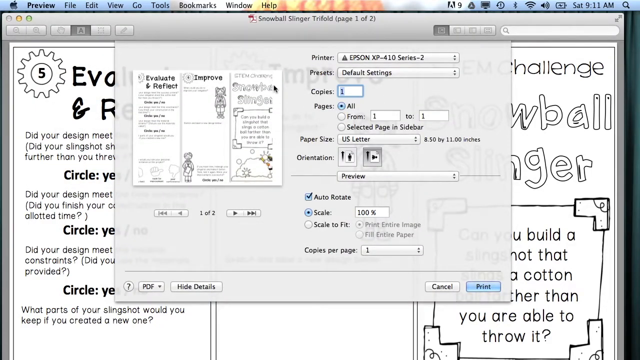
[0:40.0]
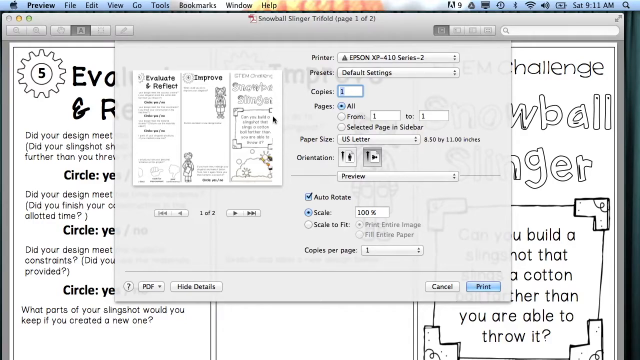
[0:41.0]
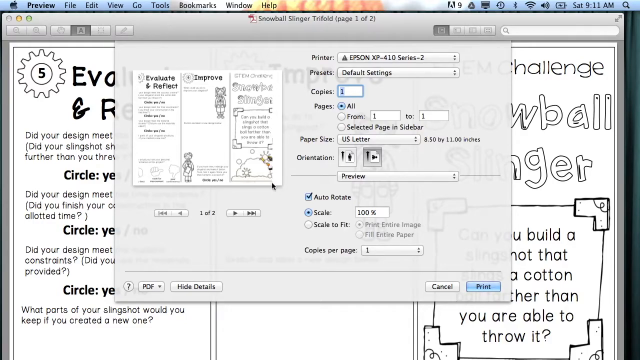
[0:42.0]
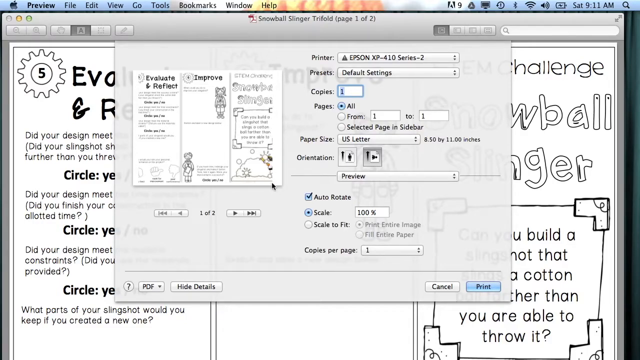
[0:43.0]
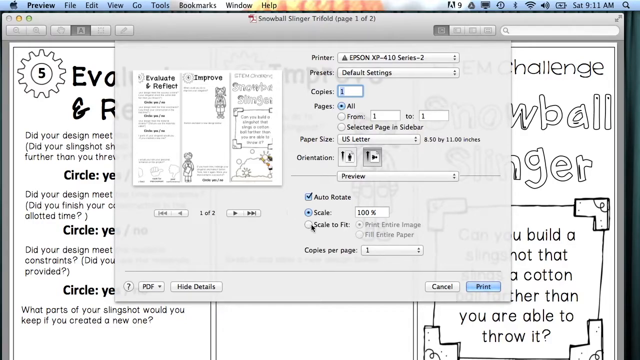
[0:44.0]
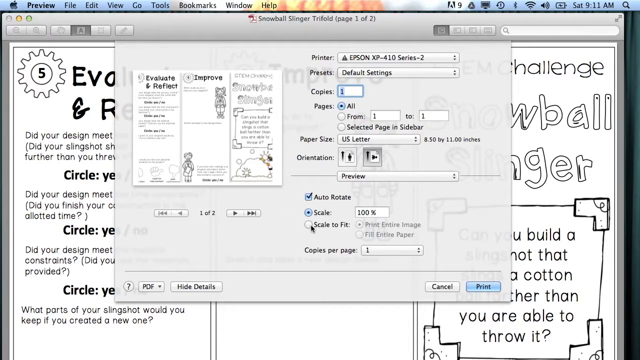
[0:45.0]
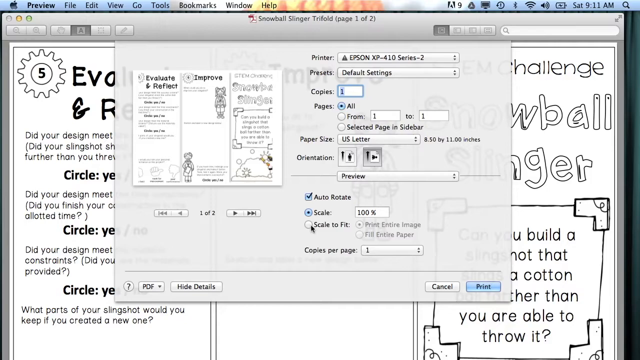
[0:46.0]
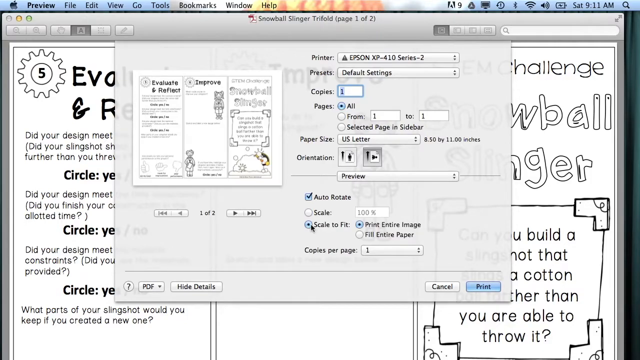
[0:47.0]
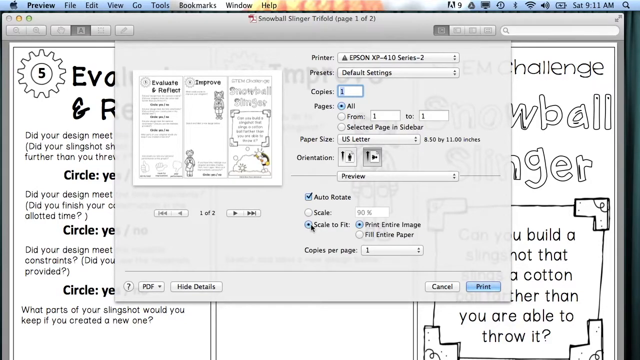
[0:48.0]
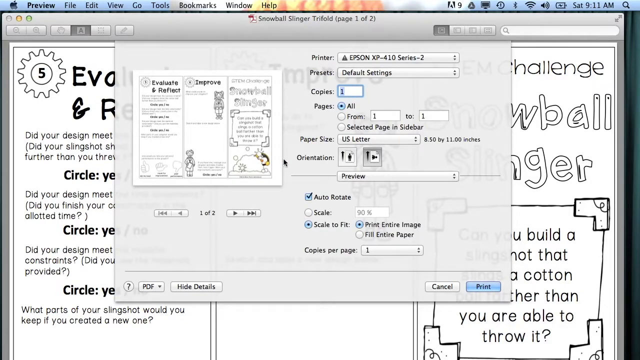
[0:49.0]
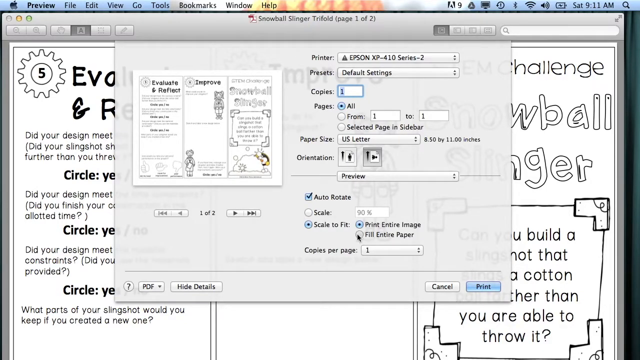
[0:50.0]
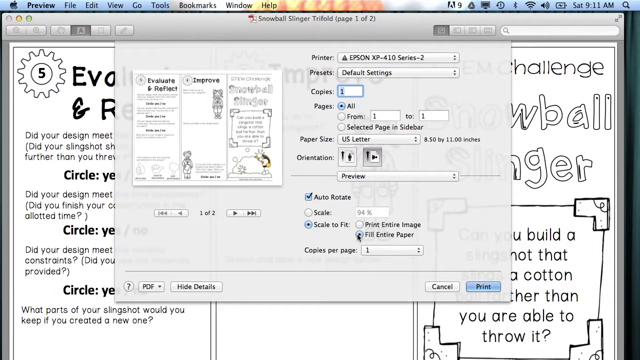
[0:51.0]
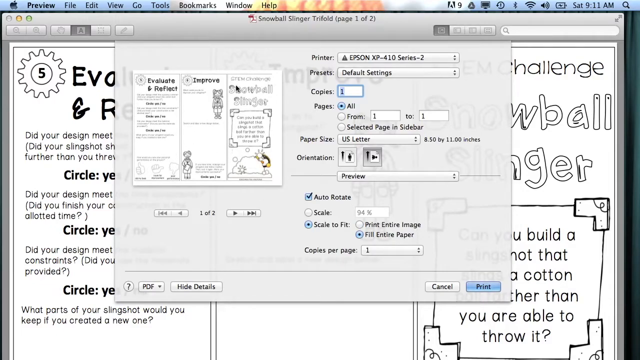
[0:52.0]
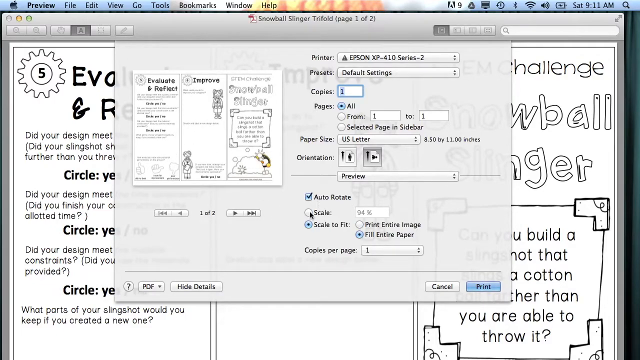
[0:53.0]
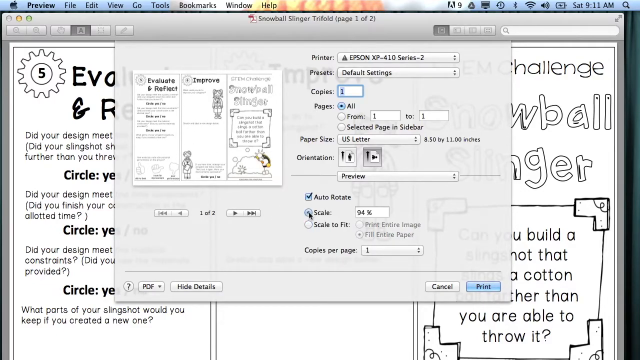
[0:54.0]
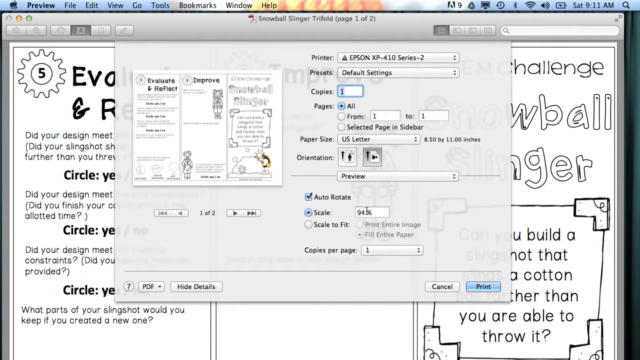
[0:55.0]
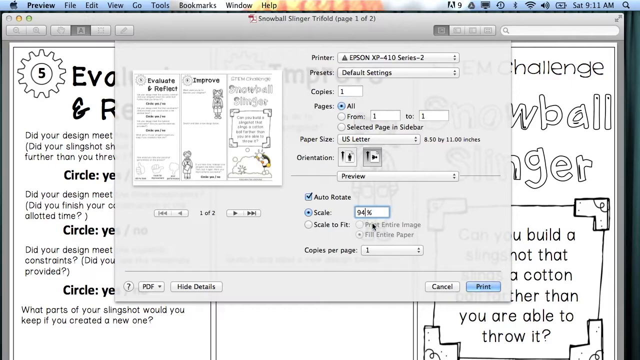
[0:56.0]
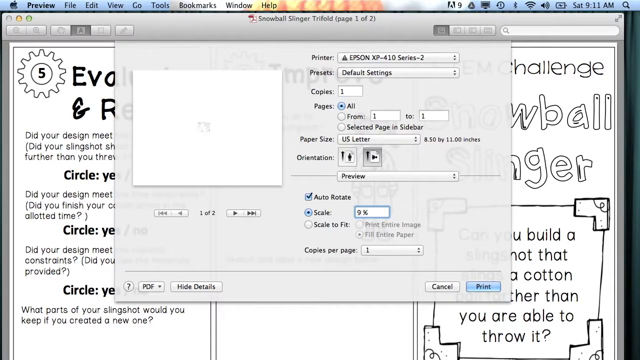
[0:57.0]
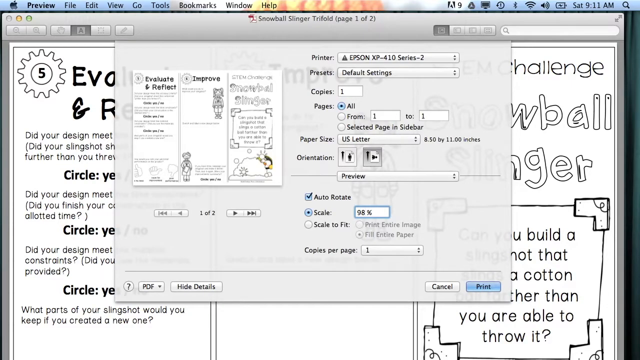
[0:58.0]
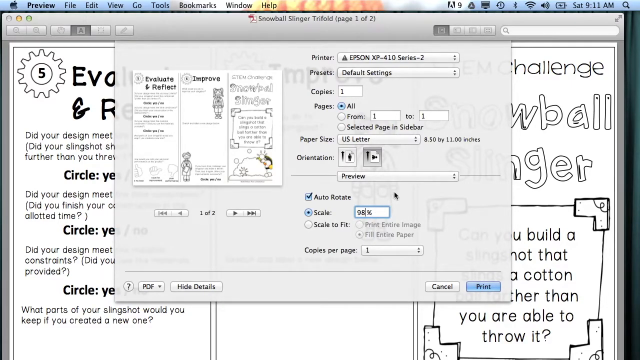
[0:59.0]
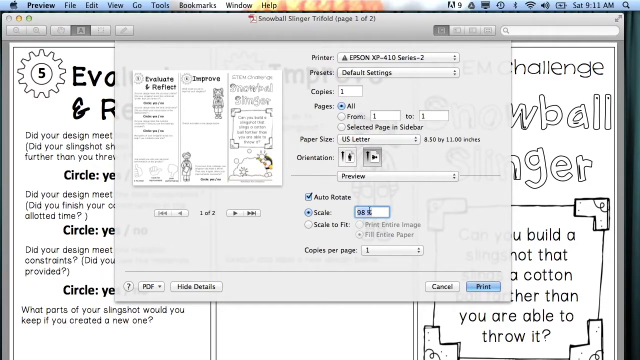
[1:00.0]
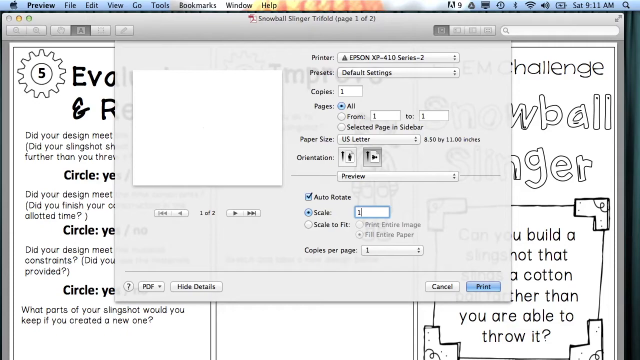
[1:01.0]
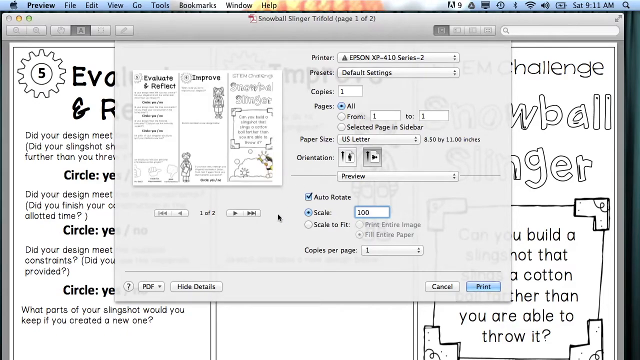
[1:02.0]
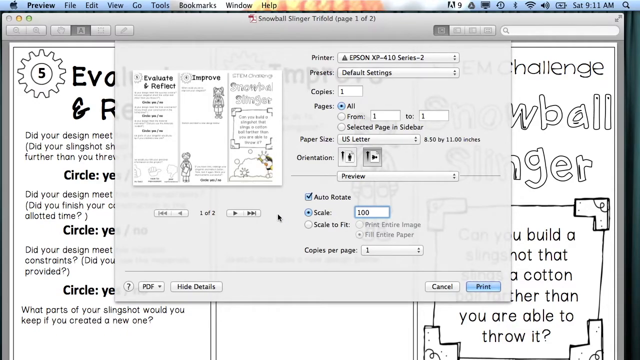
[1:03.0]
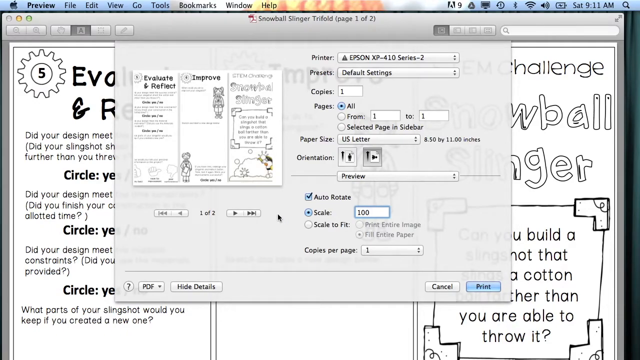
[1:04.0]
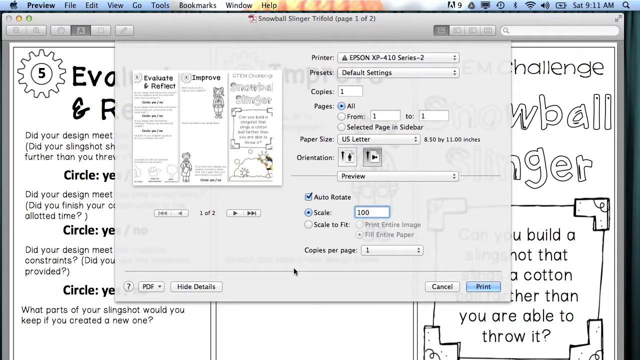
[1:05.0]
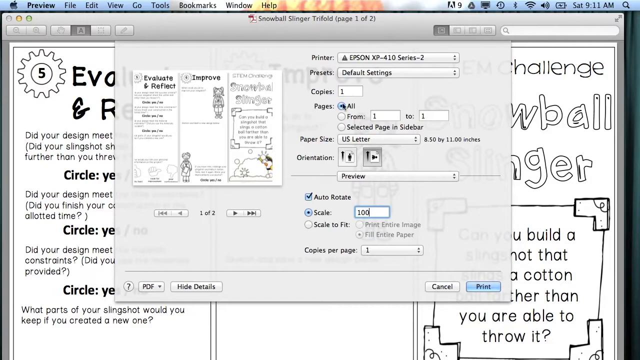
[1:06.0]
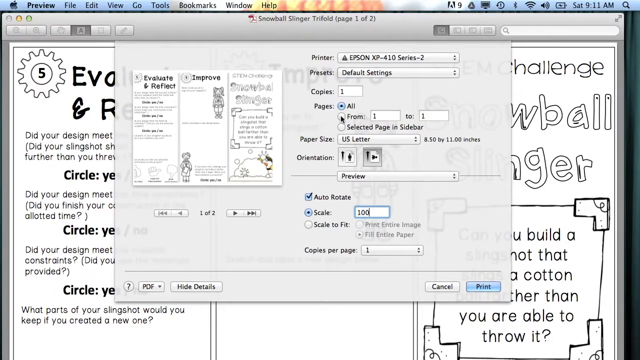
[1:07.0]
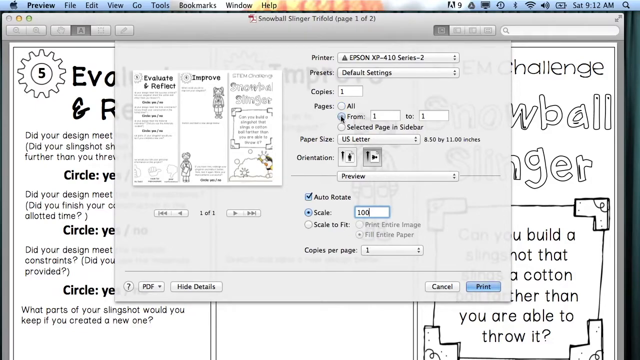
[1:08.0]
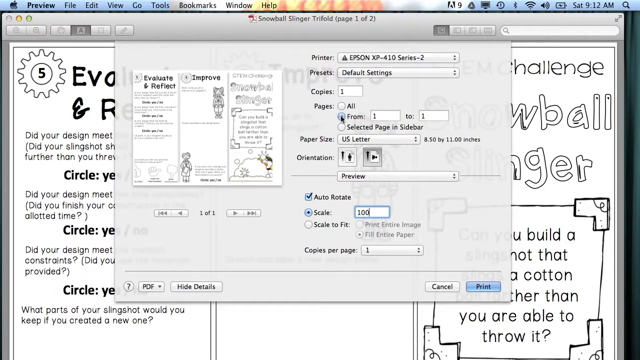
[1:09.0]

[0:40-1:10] A print preview of the paper is on screen. The printer is an Epson with default presets, copies are set to one, pages to all, paper size to US letter, orientation upright, with auto-rotate, and scale at 100%. She points the cursor at the snowball slinger, changes the scale to 90%, then to scale to fit and print entire image, with the scale now at 90%. She clicks on scale, setting it to 94%, then 98%, then 100%. She then changes pages from all to a range and selects the pages she wants to print. The preview shows a circle, the snowball slinger, and an evaluation section. Behind the print window is the paper she wants to print, with text about building a slingshot that slings a cotton ball farther than you are able to throw.